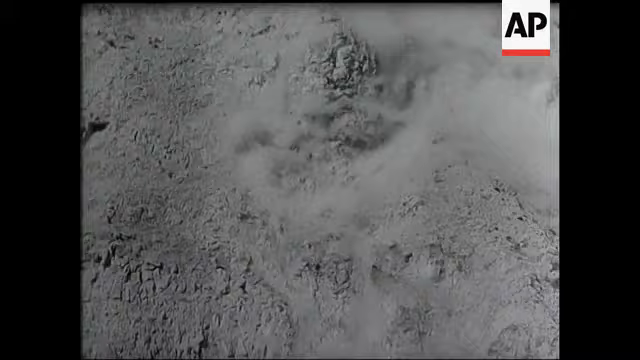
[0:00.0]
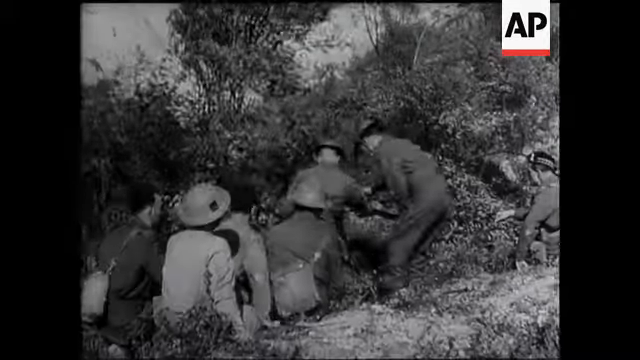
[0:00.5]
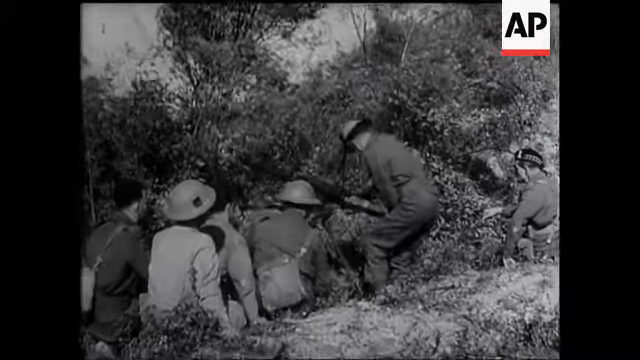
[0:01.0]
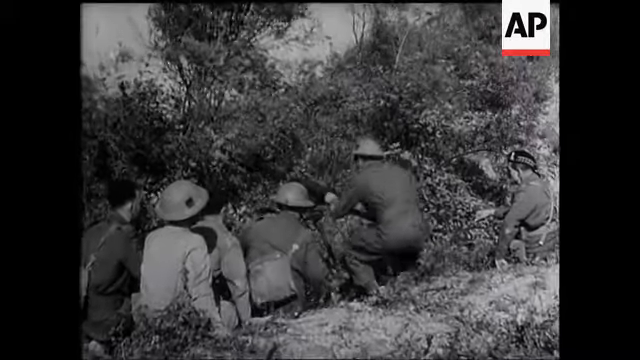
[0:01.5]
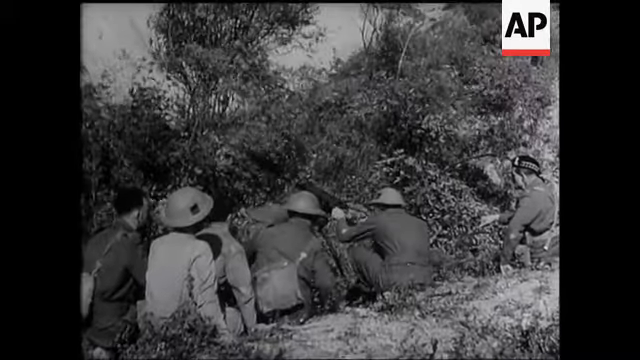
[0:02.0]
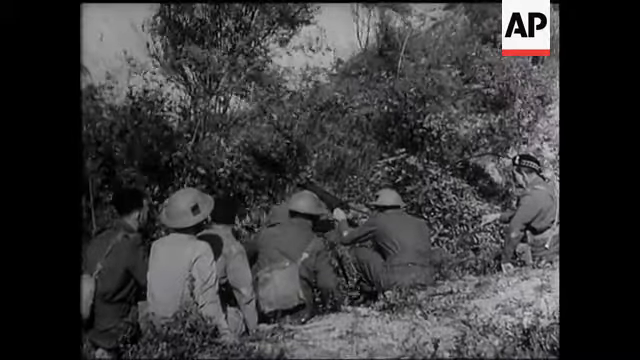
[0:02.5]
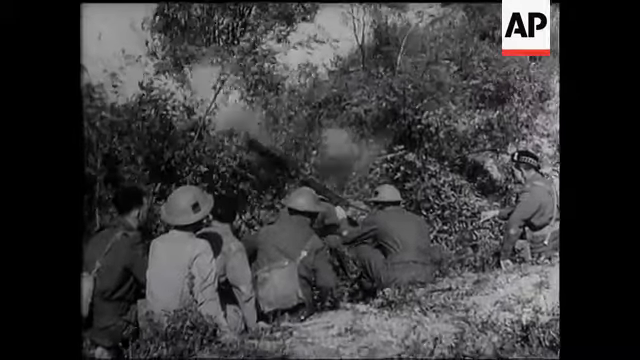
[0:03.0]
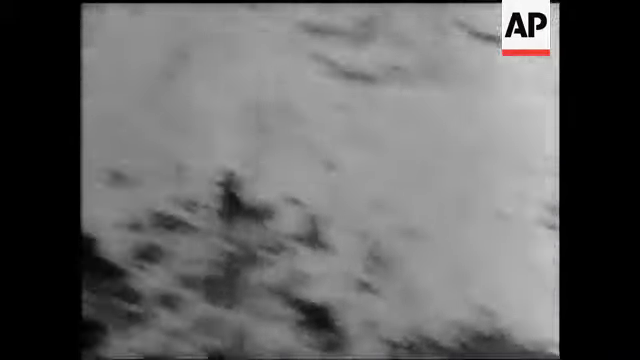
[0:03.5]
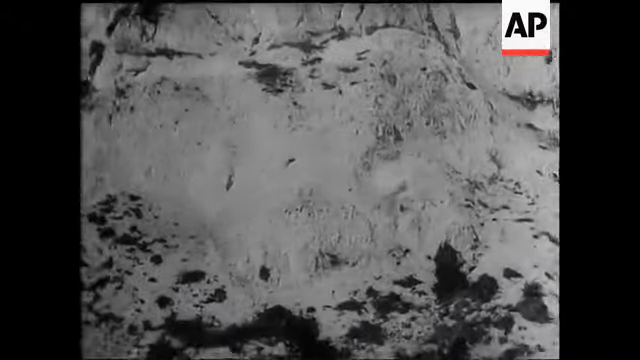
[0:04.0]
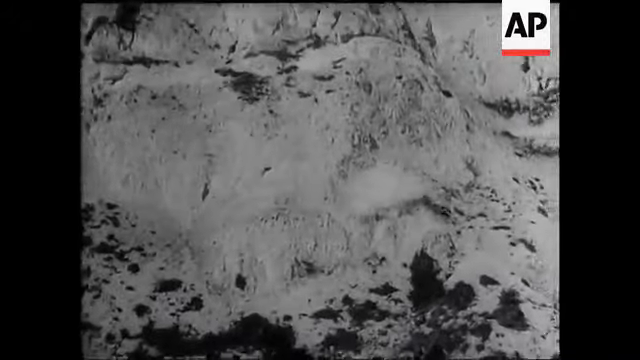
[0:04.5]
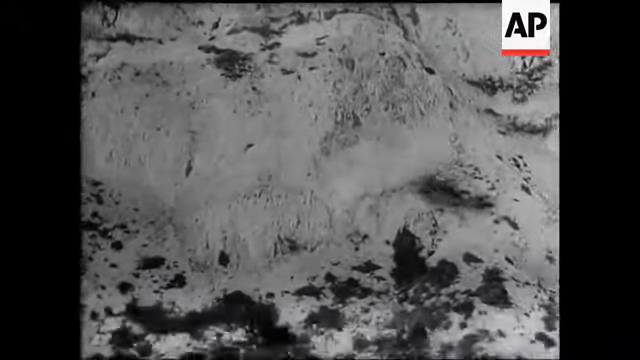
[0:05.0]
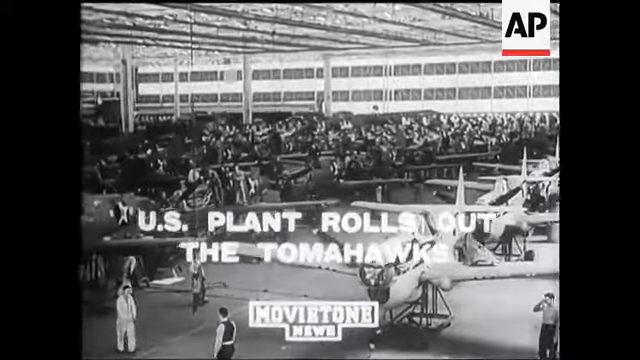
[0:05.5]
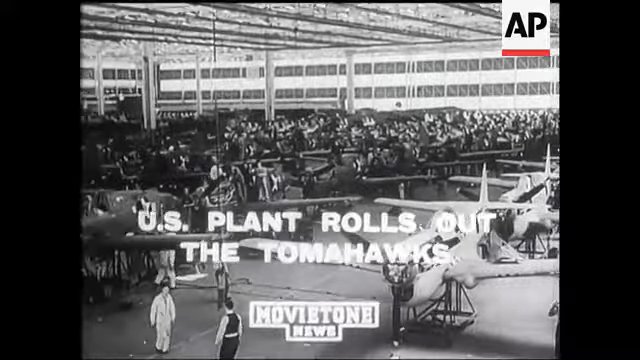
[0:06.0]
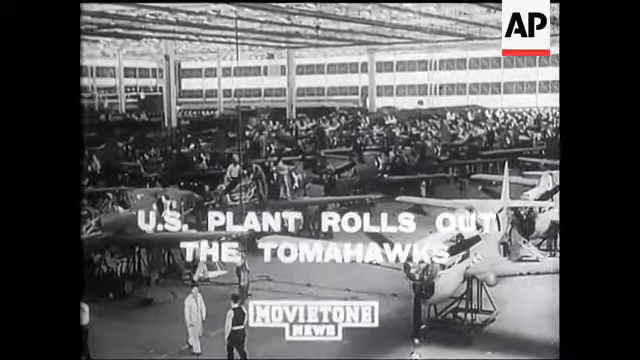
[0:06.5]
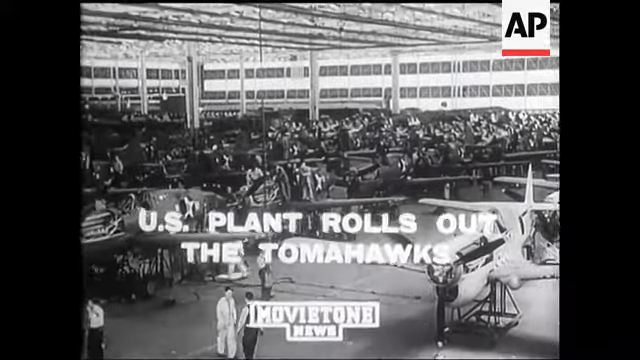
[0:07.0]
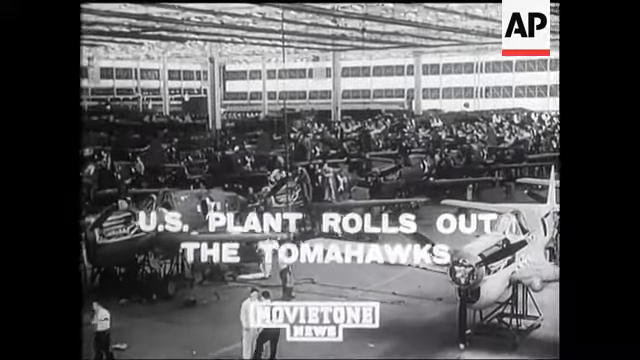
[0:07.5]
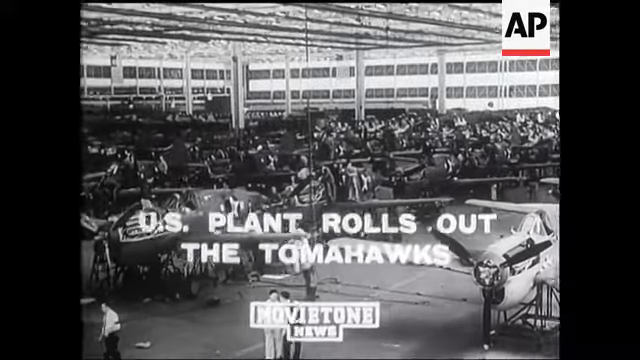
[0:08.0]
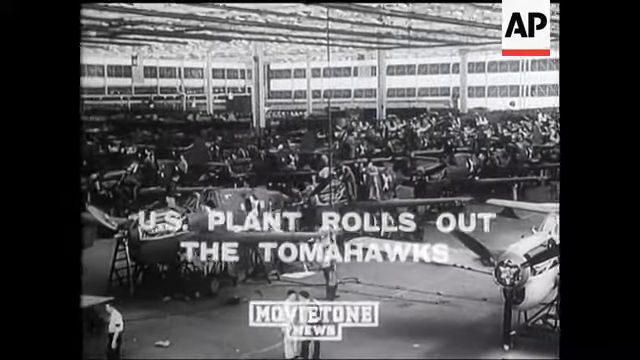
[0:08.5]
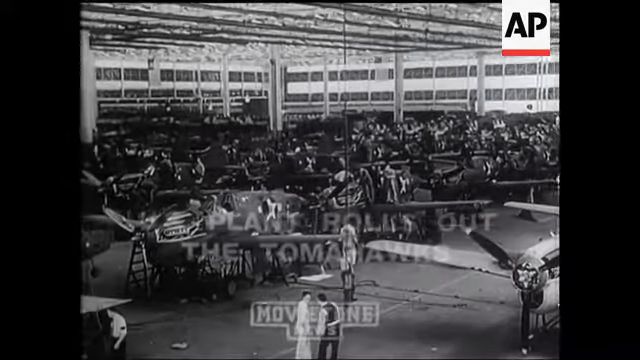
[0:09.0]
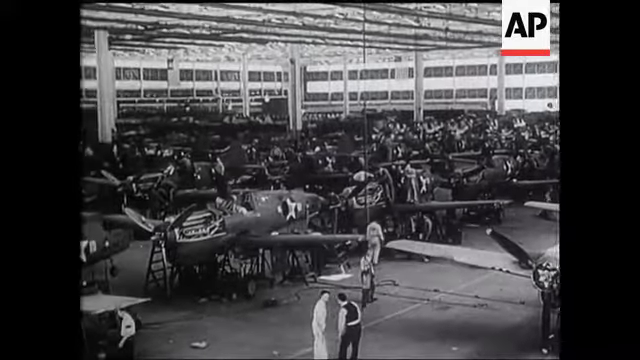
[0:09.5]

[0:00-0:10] The video is a production by AP, filmed in black and white. The first shot appears to be an aerial view of rough ground with smoke rising. The camera quickly cuts to a group of soldiers in hard helmets looking at something in some foliage. They appear to be loading a gun: the first man bends to the rear of the gun and raises the angle of its front end as he crouches down, his arms holding the gun and changing its direction. A blast comes from the front of the gun with a large plume of smoke. The camera follows the angle of the shot to an explosion in the side of a mountain opposite the soldiers, in the centre of the mountain wall, with dust coming out at speed. The camera then cuts to an aircraft hangar with lots of US airplanes lined up in rows. The title says "US plant rolls out the Tomahawks", and the shot is from Movietone News. A few men in the foreground walk around the hangar, and one man in a black waistcoat at the front of the screen goes to talk to a man in a white boiler suit.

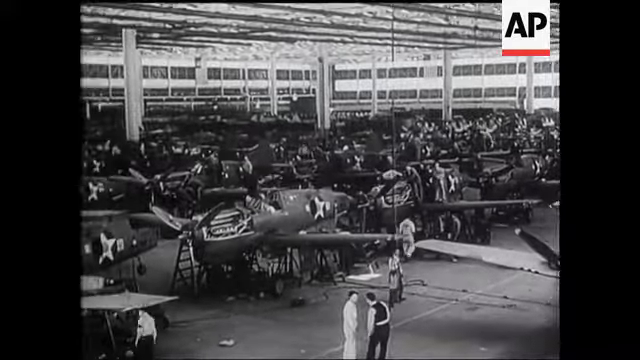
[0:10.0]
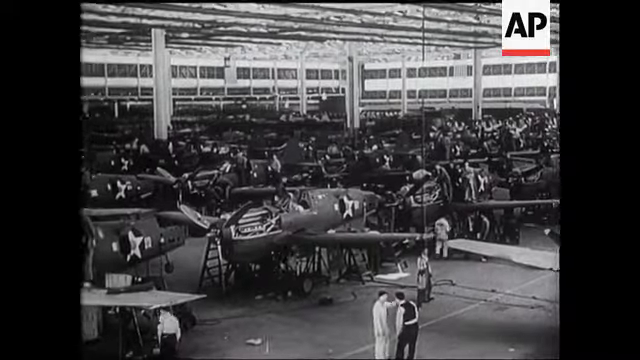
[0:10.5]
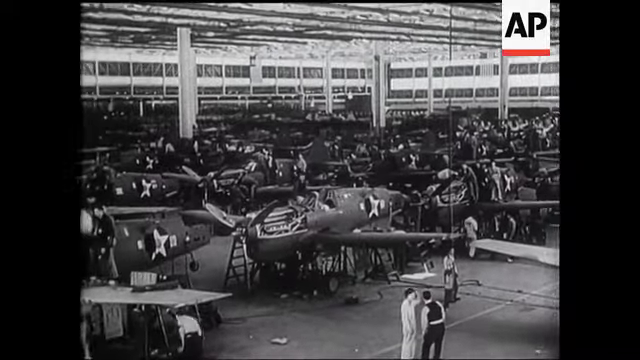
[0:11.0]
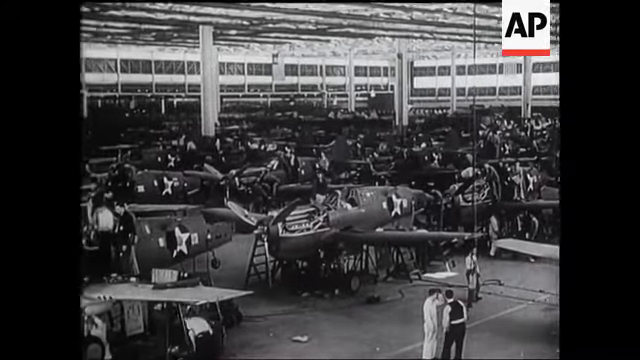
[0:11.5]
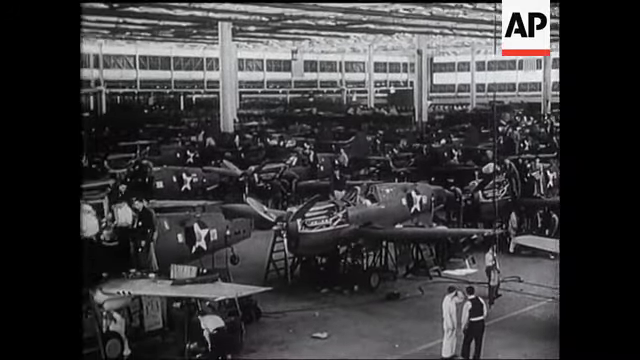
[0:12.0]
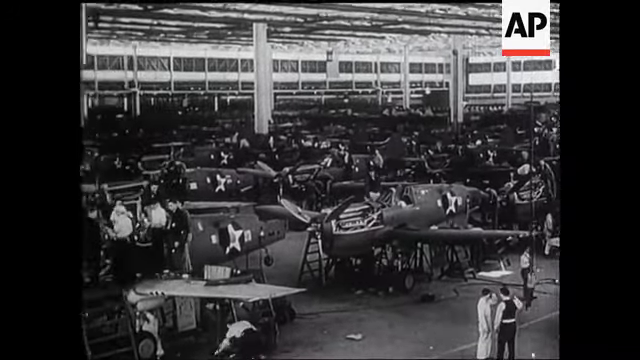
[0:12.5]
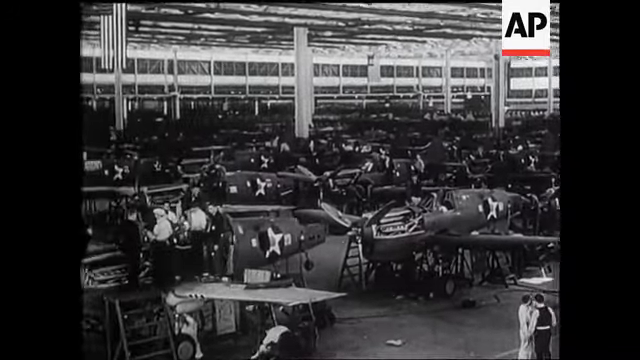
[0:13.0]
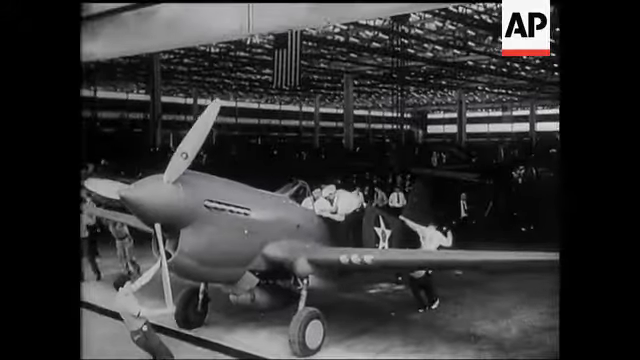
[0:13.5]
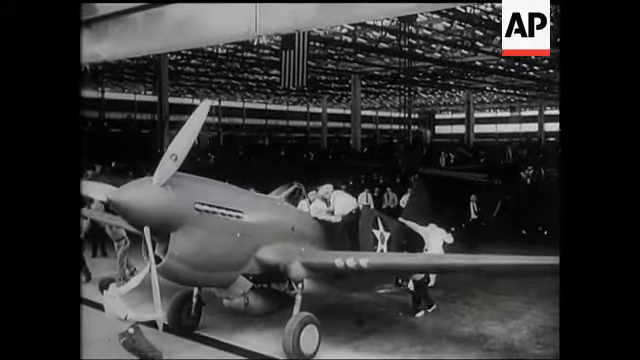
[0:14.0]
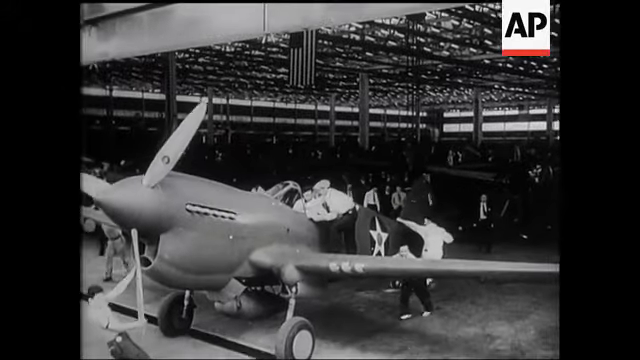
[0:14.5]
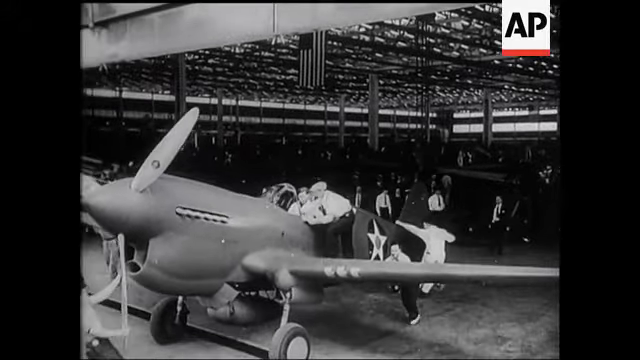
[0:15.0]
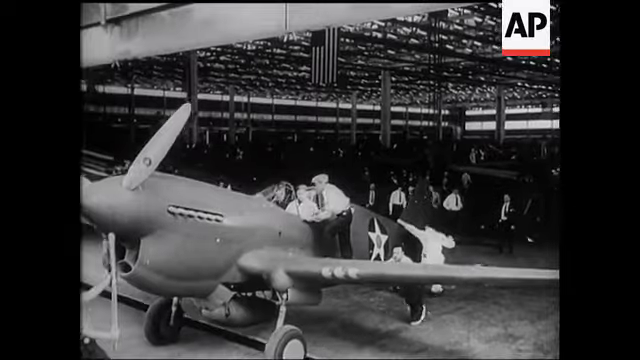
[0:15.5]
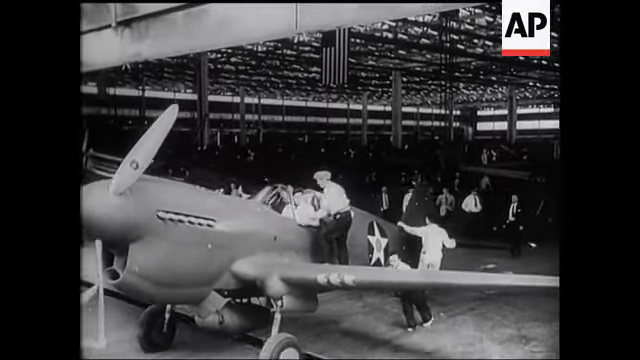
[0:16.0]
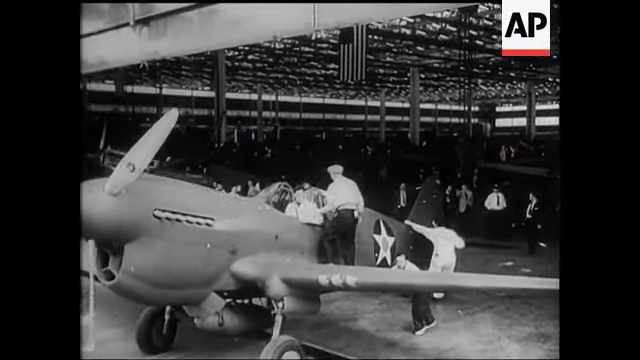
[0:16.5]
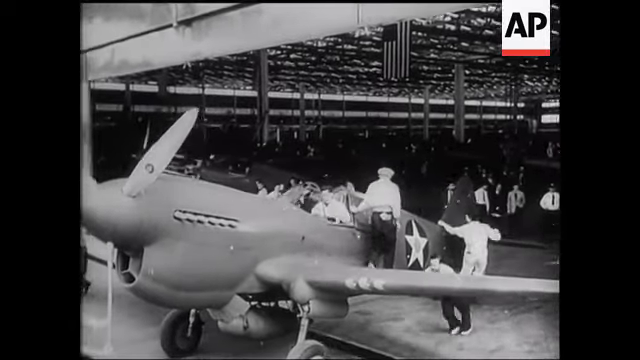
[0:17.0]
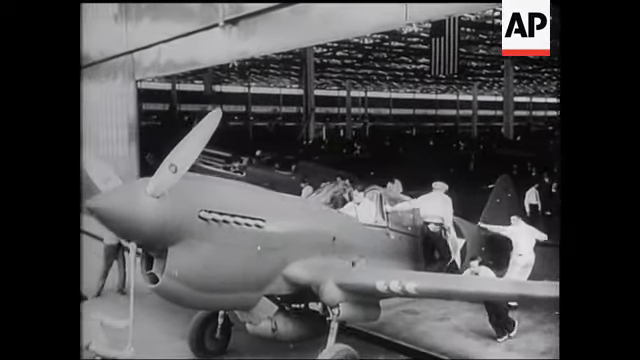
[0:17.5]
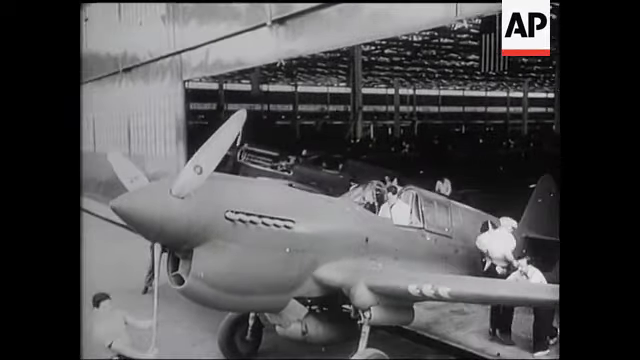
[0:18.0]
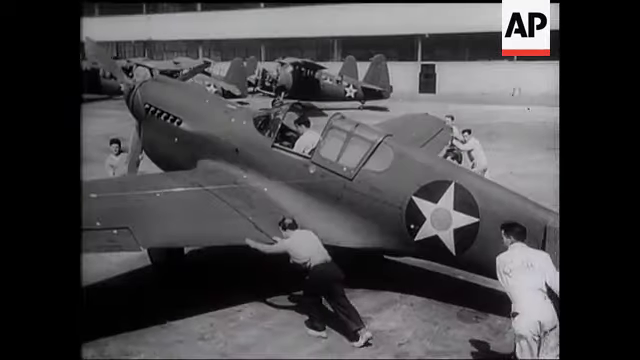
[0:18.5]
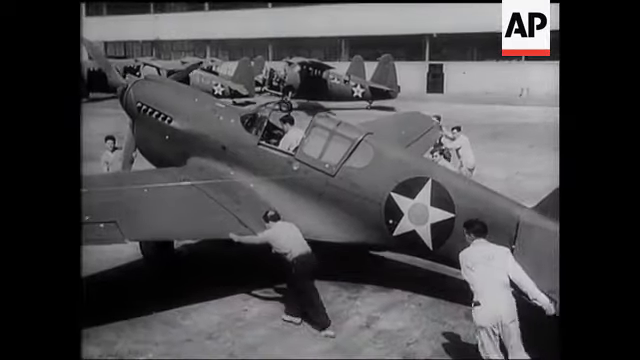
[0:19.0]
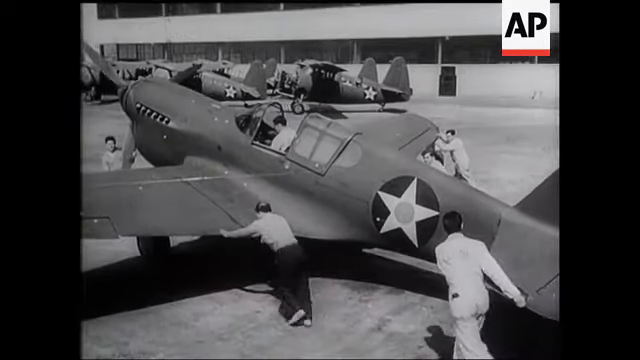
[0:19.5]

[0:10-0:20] Inside the US aircraft hangar, hundreds of Tomahawks are lined up in rows in various stages of production, with small ladders for the workmen and engineers to access them. As the camera pans around, a group of people on the left of the screen are stood near the wing and cockpit of a Tomahawk plane, with some men working underneath. At the doorway of the hangar, a group of men pull a Tomahawk out while a man leans into the cockpit to talk to someone inside. One man pulls the plane by its propeller at the front while other men push the wings and tail as they move it out of the doorway. The man who was talking to the person in the cockpit walks down the side of the plane and jumps down. The same plane is then seen from the other angle as it joins other aircraft outside, with the men pushing it by the wings and tail and pulling it by the propeller. On the rear of the plane is a circle with a pale star, and the star has a different colored circle in its center.